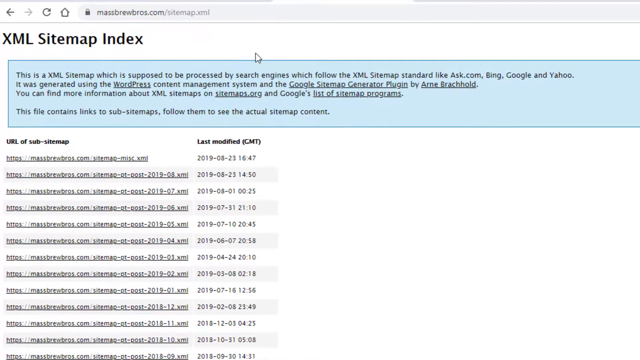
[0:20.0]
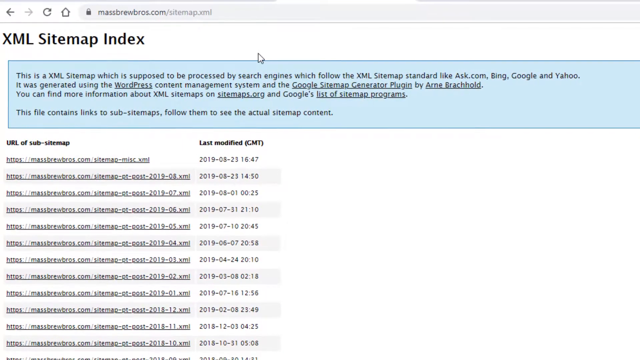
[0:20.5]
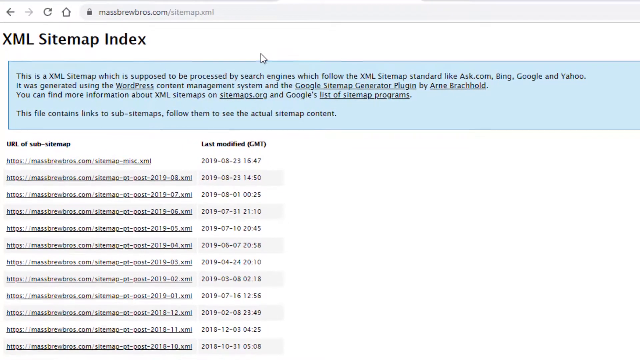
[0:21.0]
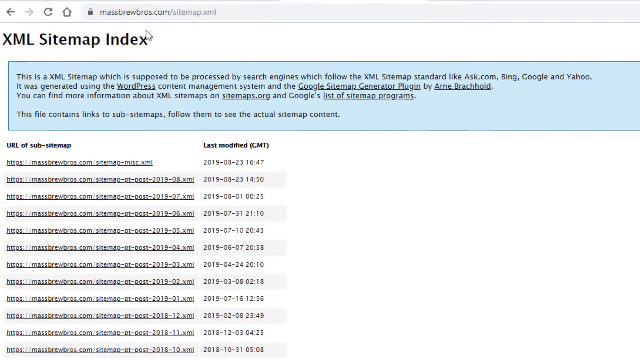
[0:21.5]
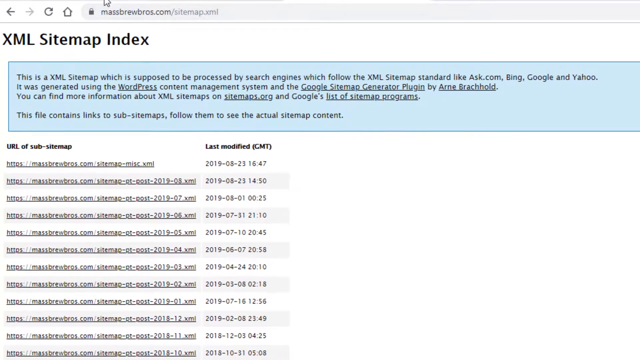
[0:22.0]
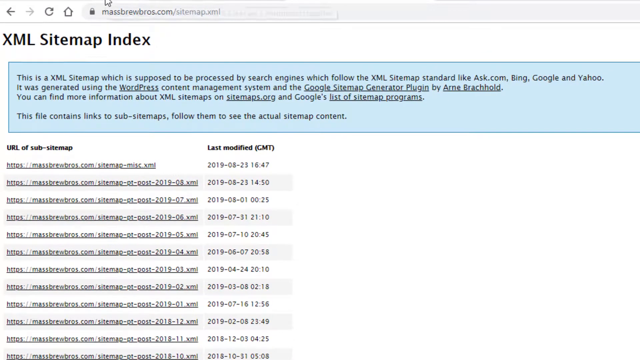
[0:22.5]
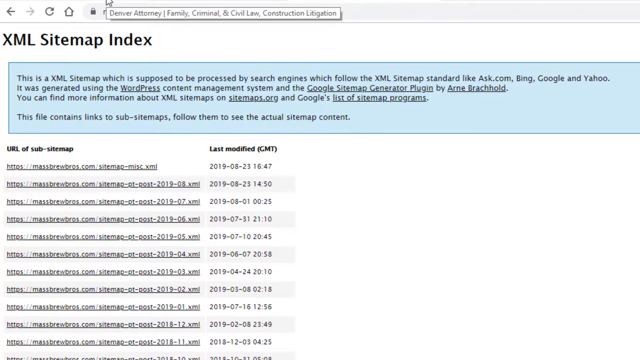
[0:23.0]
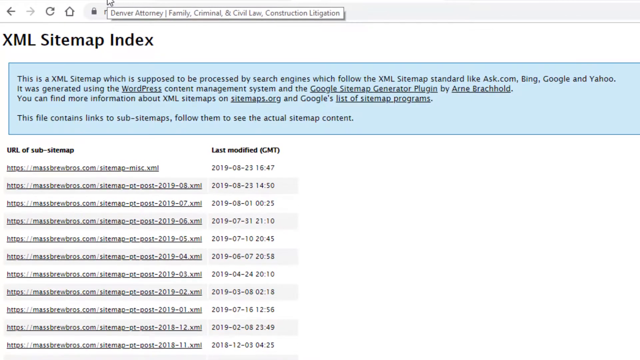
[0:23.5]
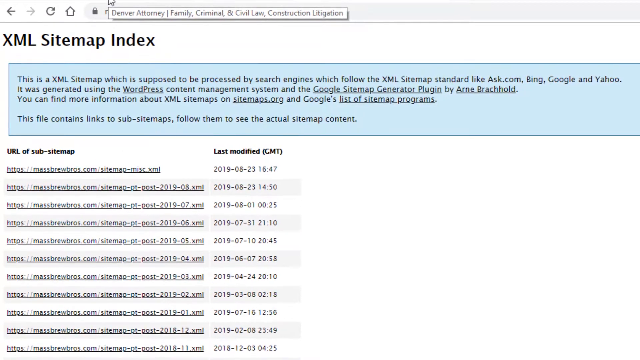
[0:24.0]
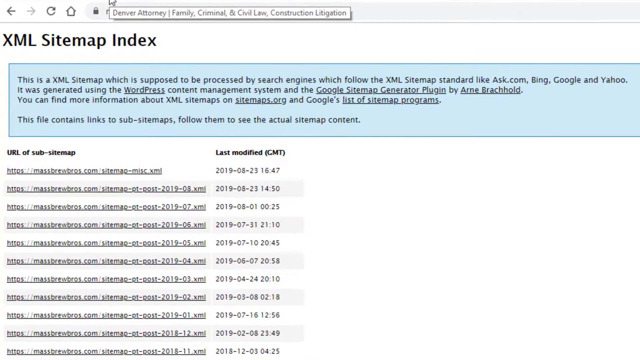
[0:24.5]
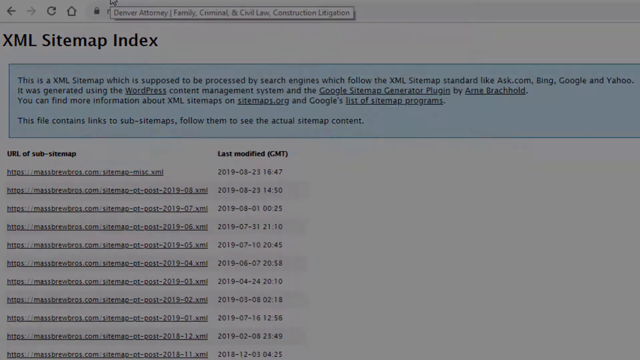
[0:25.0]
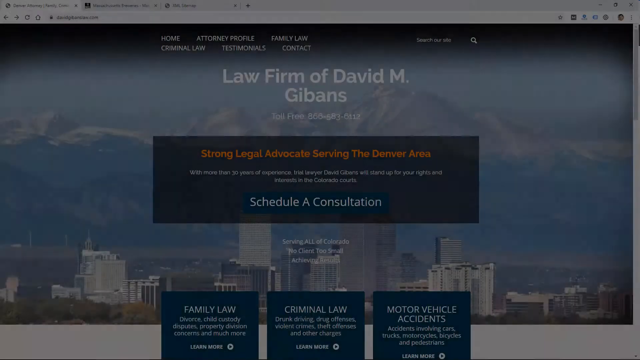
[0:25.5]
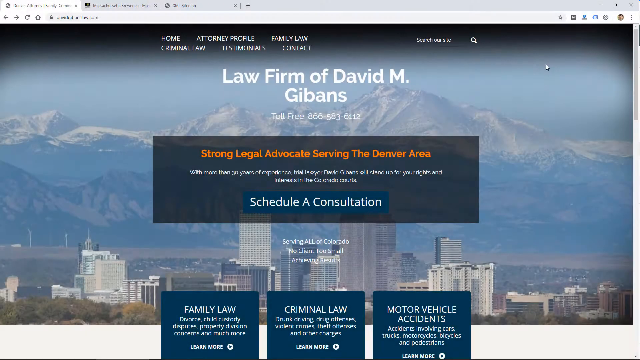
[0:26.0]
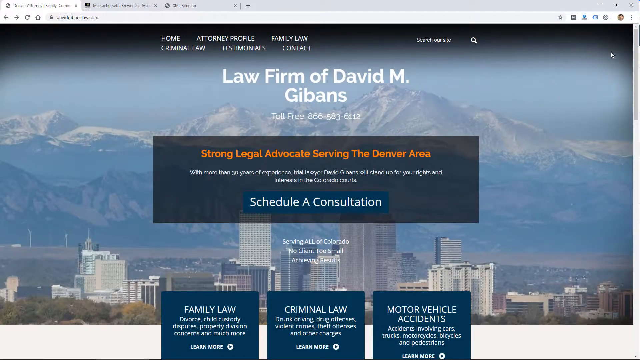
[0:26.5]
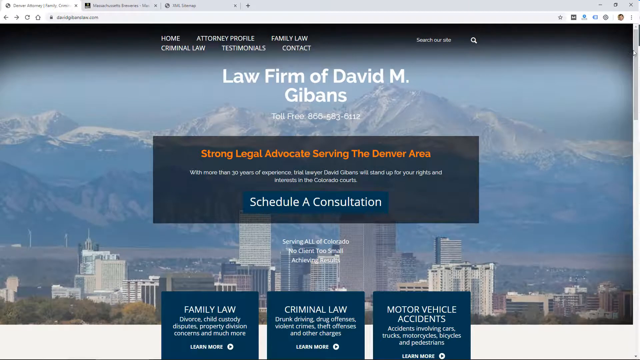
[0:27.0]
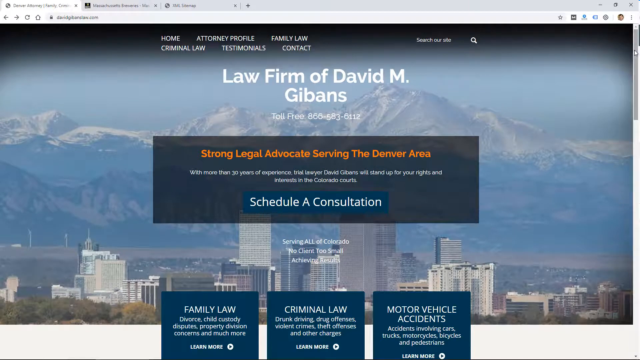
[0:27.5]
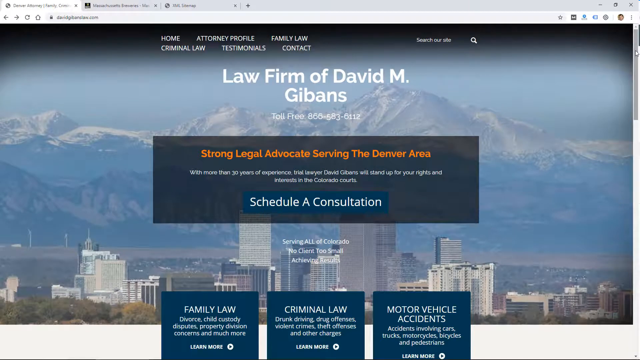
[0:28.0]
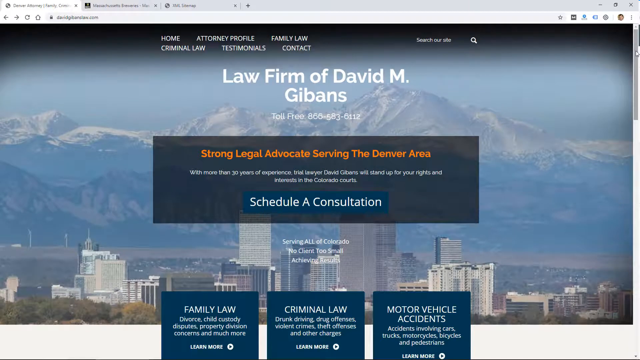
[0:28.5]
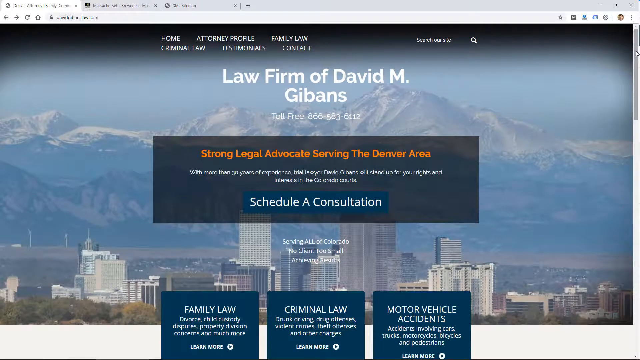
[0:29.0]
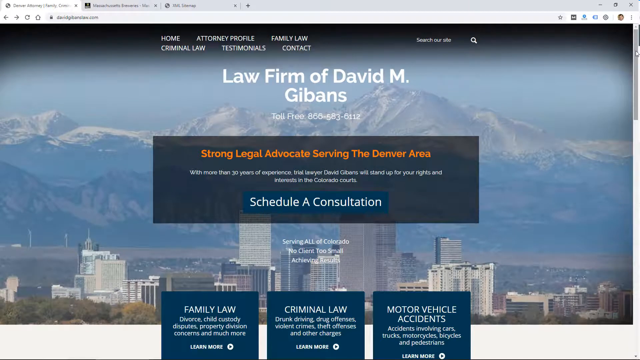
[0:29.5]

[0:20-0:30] A website is shown on a white computer screen. At the top left are a back button, a forward button, a refresh button and a download button, with the search bar to their right reading "MassBrewBros.com." Below that, at the top left, the page reads "XML Sitemap Index," followed by a blue banner with writing in it. Below the banner is "URL of sub-sitemap," with "Last Modified (CMT)" to its right. A list of dates is below "Last Modified," including "2019-05-23" with a time of 15.47 or 16.47, and a list of URLs is under "URL of sub-sitemaps." The view zooms in. The mouse pointer moves to the top left of the screen. The screen goes black and then shows another site reading "Law Firm of David M." followed by a further name.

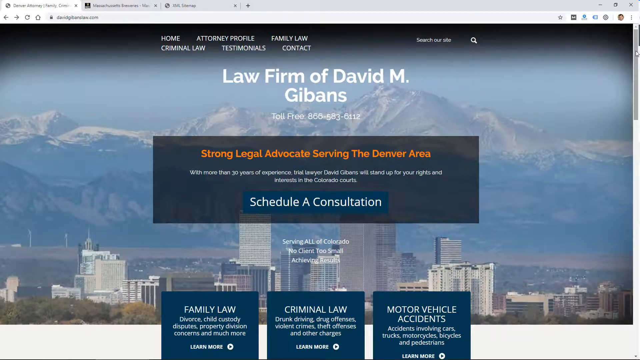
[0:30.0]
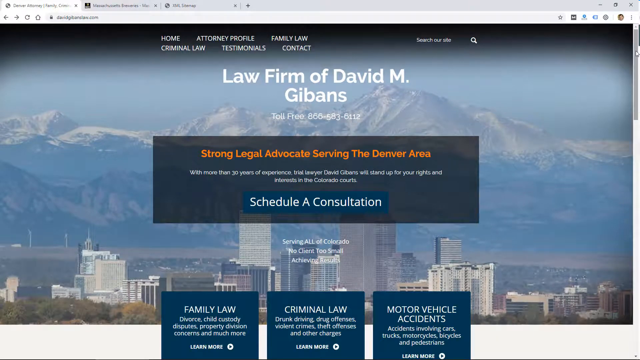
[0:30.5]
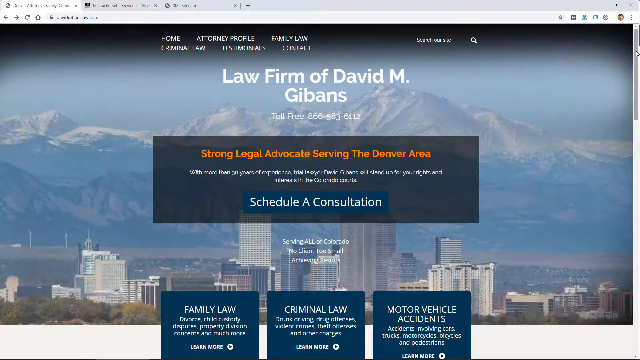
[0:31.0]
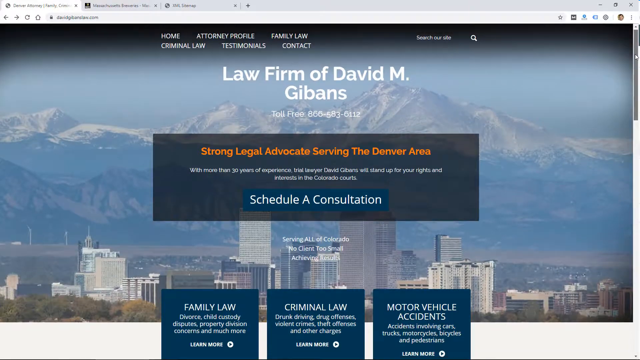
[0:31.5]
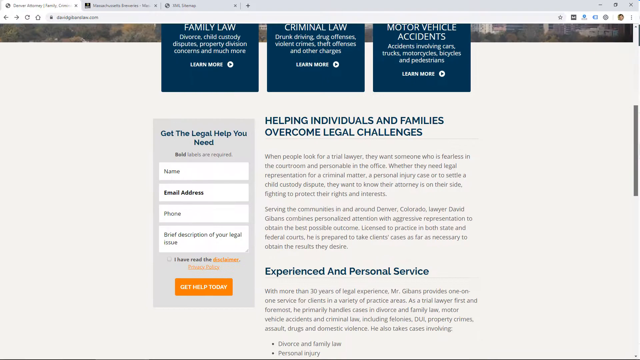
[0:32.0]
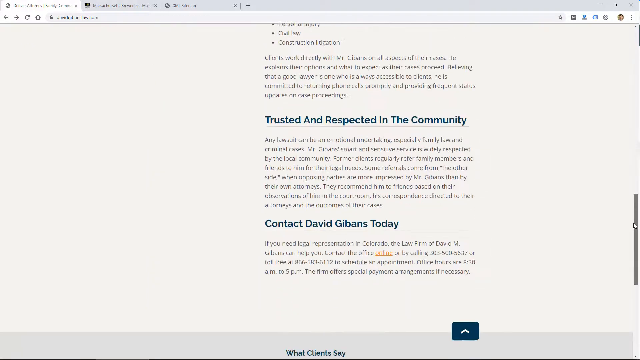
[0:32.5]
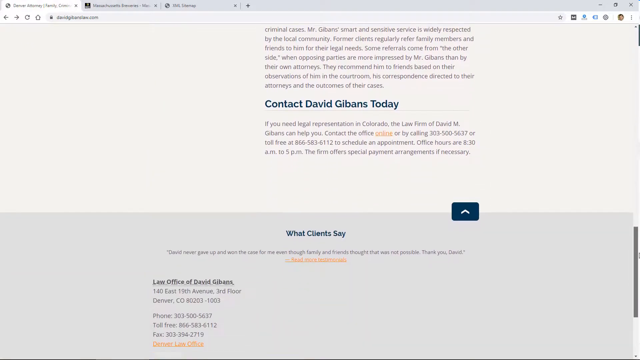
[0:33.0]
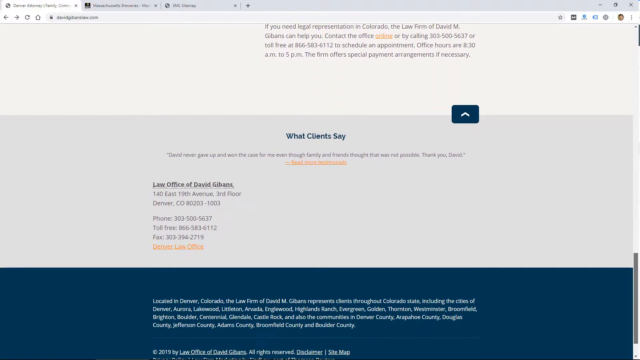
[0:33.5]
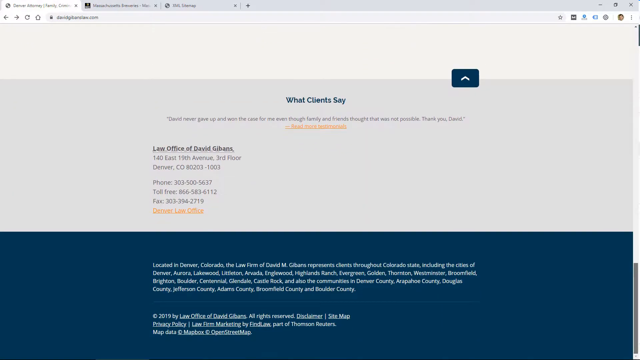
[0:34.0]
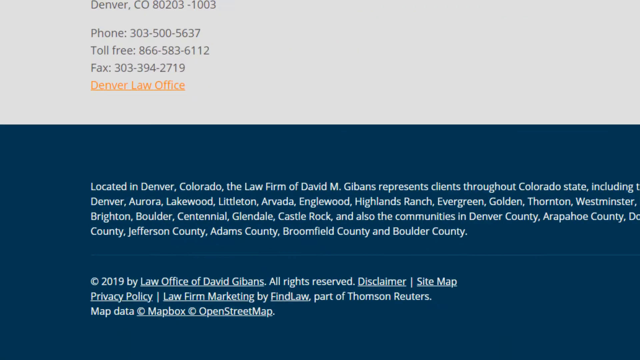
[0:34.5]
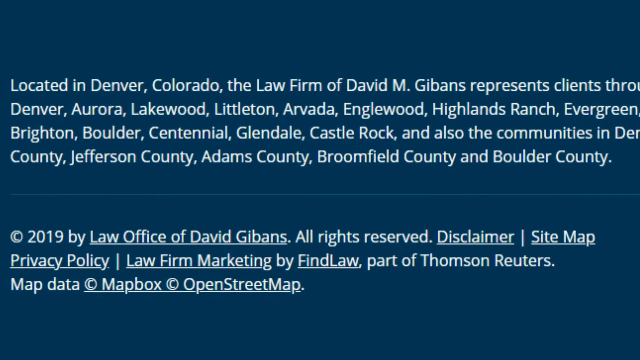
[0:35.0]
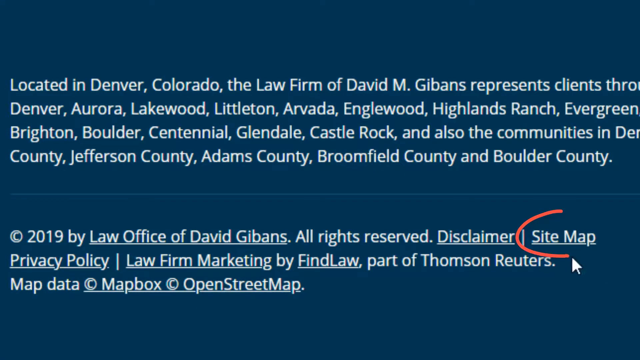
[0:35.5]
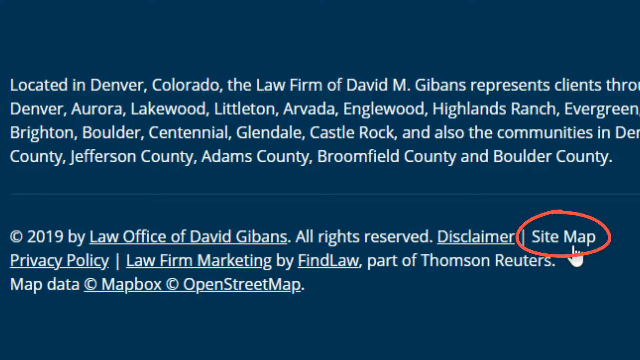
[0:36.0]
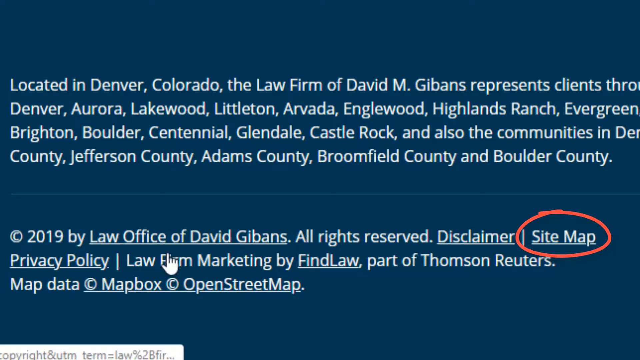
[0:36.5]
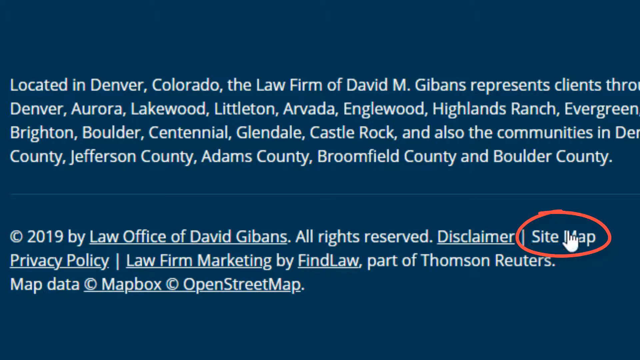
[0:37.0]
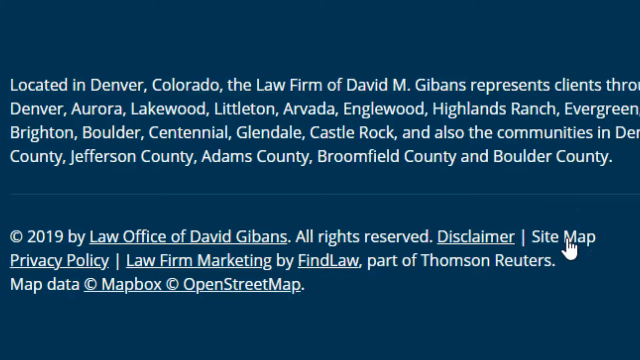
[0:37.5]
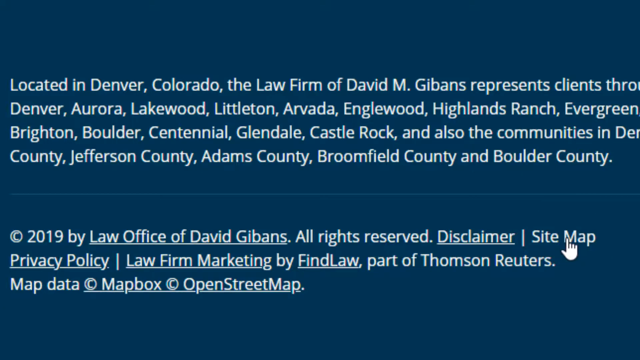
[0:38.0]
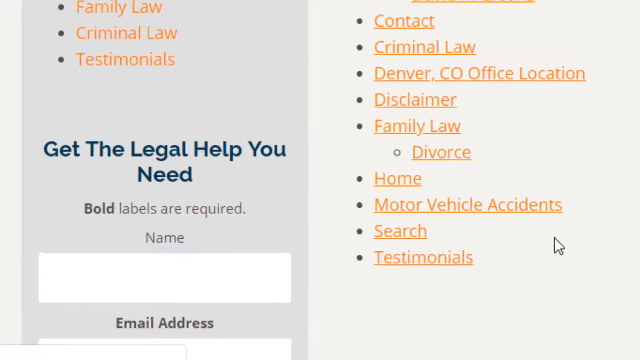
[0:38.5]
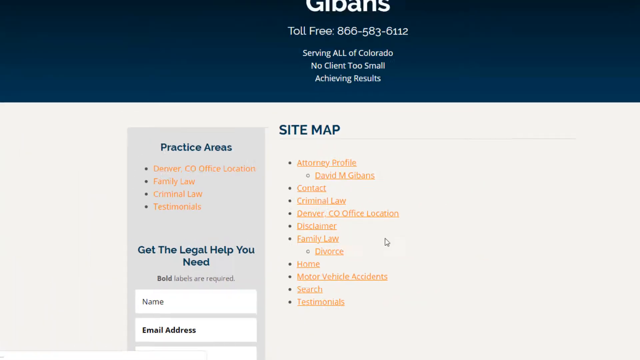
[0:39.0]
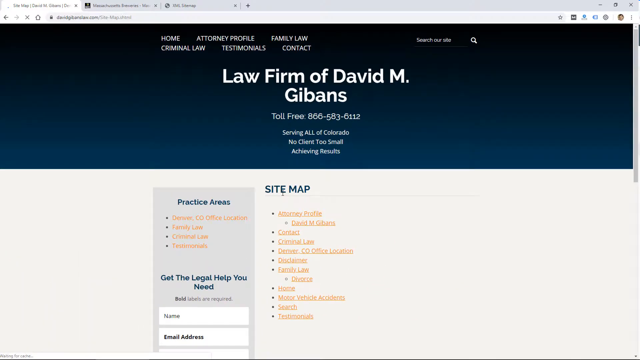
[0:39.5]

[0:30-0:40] A website on a computer screen shows a city in the background with a mountain range and blue sky above. At the top middle it reads "law firm of David M. Gibbons toll free 866-583-6112." Below that, a darker banner reads "strong legal advocate serving the Denver area," so the picture is of Denver. Underneath is "schedule a consultation." At the bottom are three squares: "family law" on the left, "criminal law" in the middle and "motor vehicle accidents" on the right. The page scrolls down to the very bottom, reaching a blue section, and the view zooms in on it. At the bottom right, "sitemap" is circled in red. The pointer, shaped like a finger, passes over the words "find law" and over "sitemap," then clicks on "sitemap."